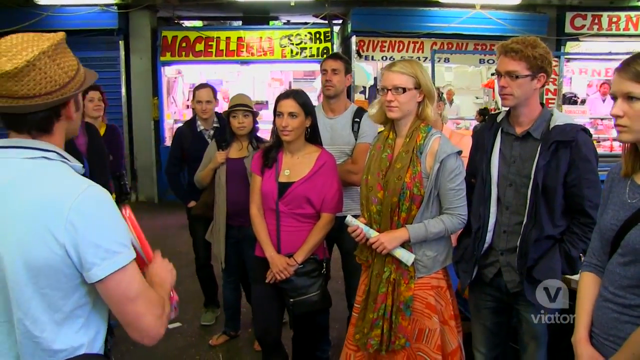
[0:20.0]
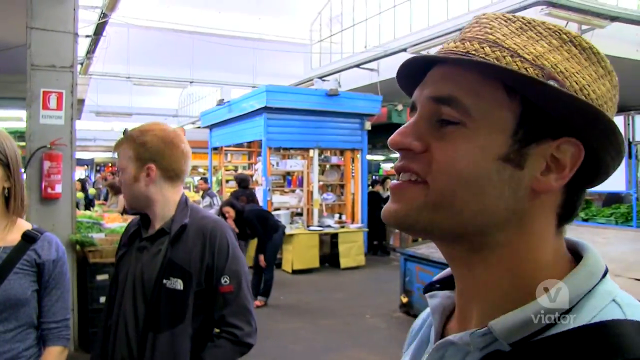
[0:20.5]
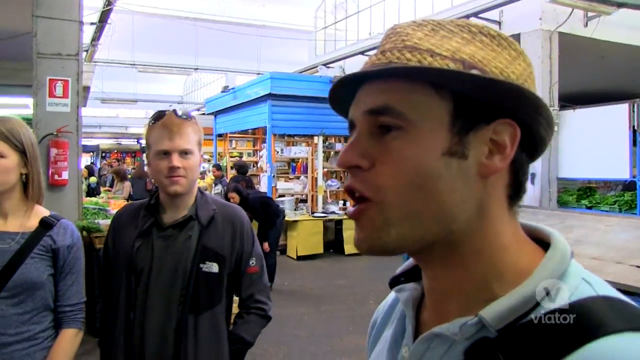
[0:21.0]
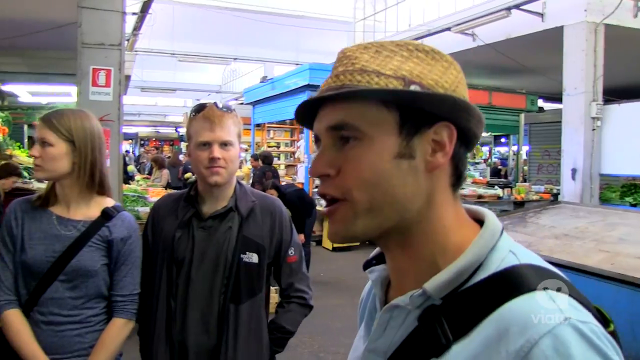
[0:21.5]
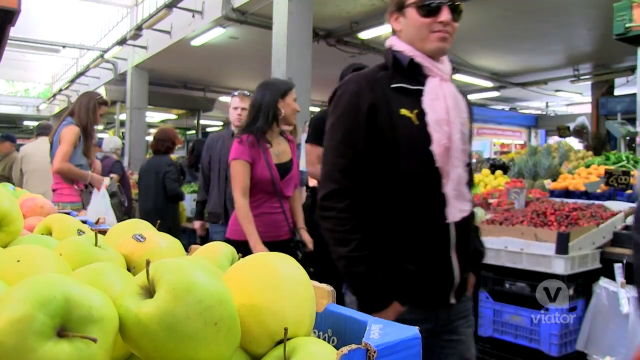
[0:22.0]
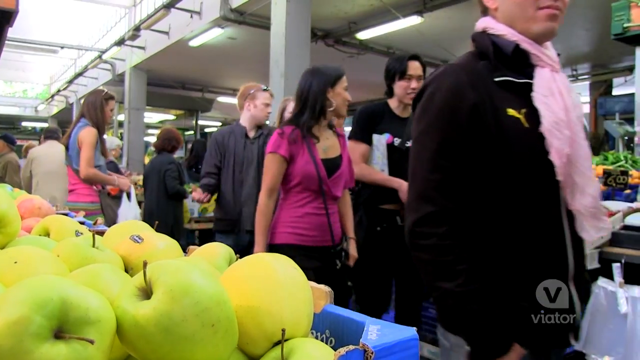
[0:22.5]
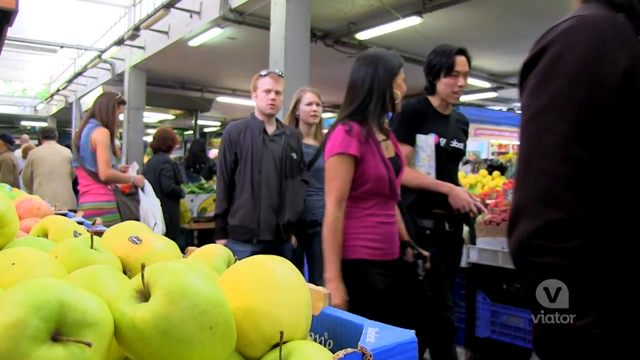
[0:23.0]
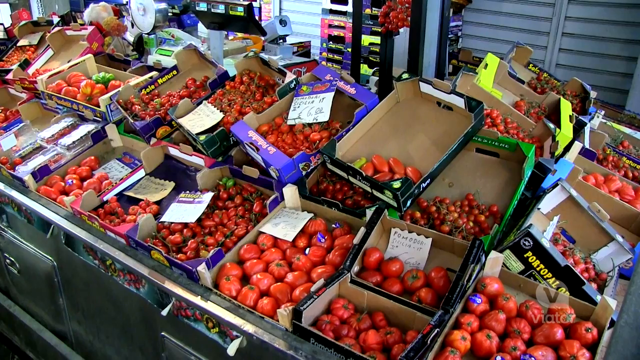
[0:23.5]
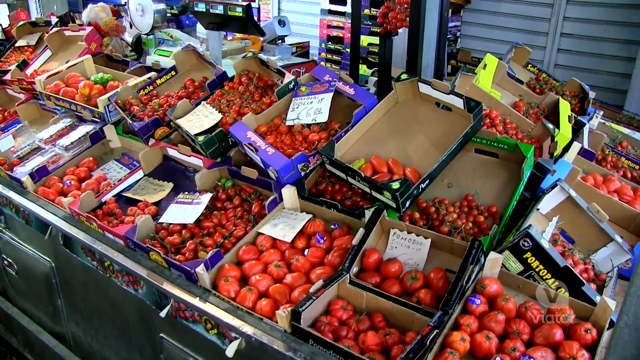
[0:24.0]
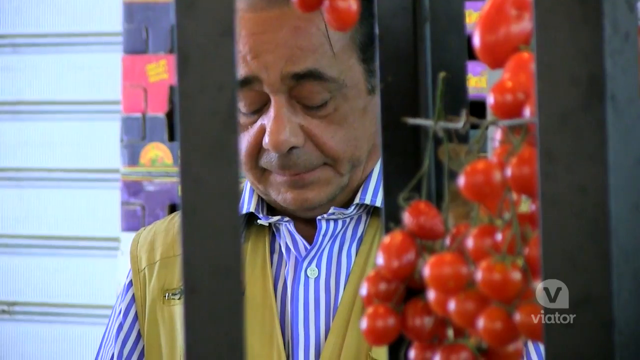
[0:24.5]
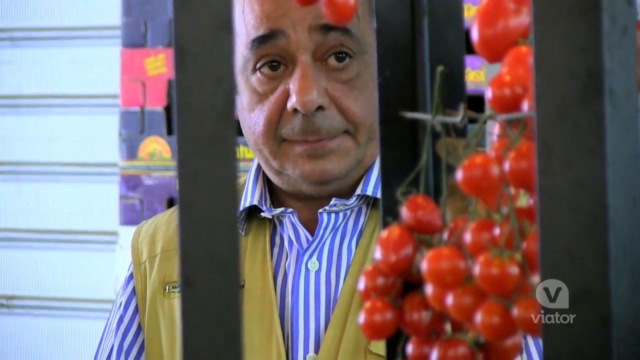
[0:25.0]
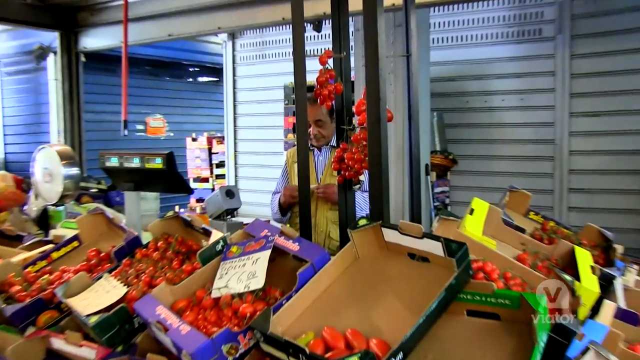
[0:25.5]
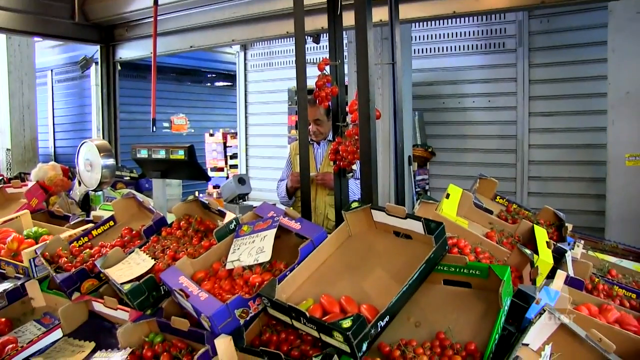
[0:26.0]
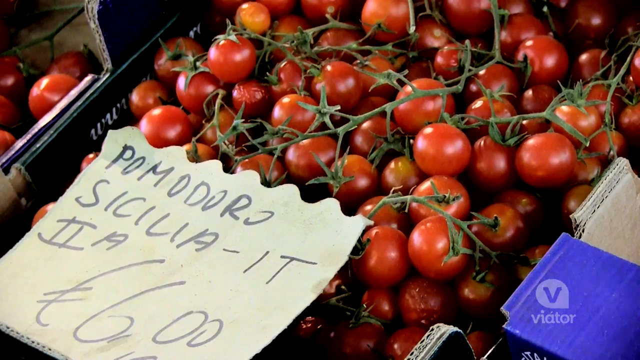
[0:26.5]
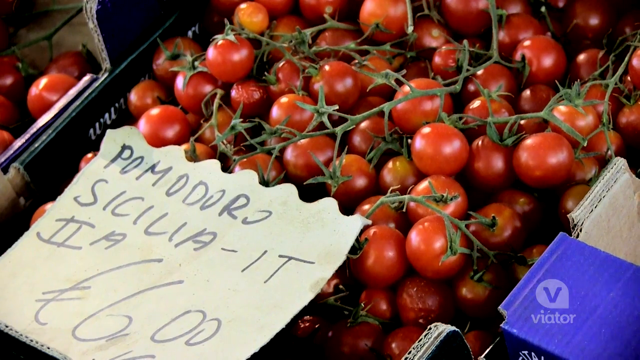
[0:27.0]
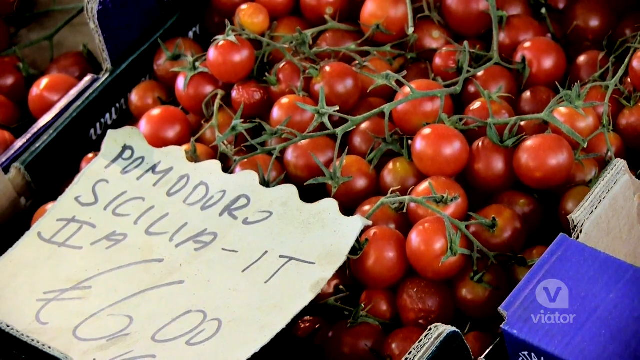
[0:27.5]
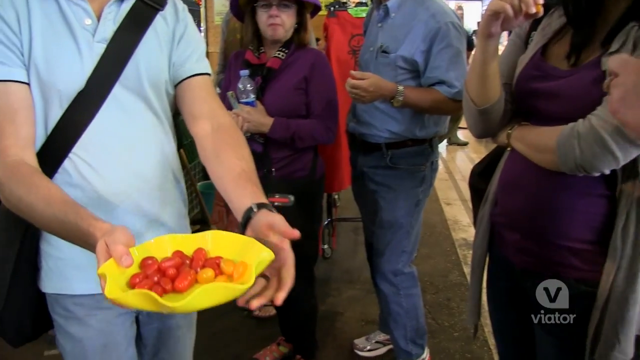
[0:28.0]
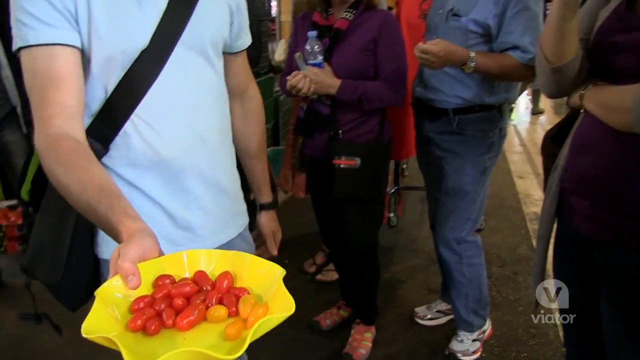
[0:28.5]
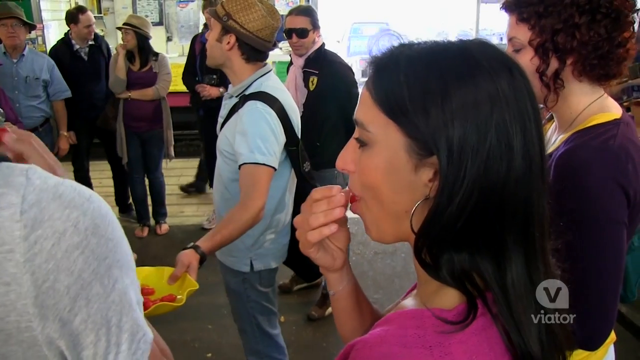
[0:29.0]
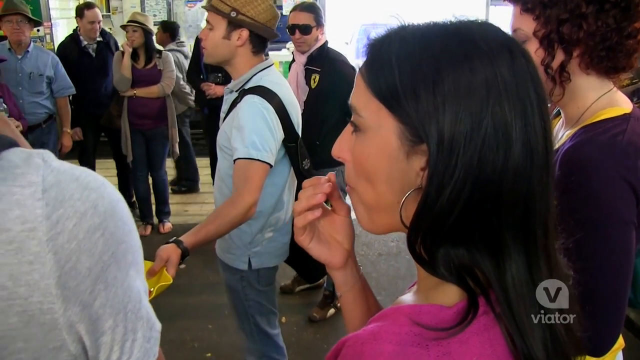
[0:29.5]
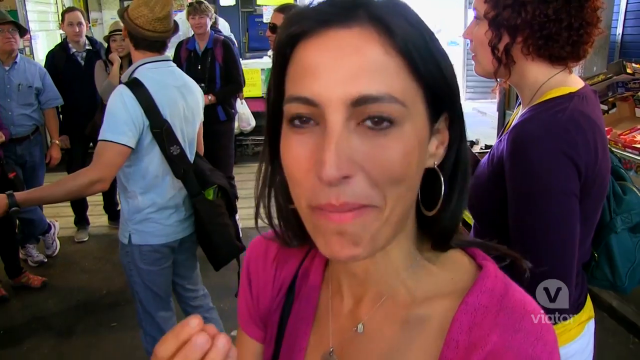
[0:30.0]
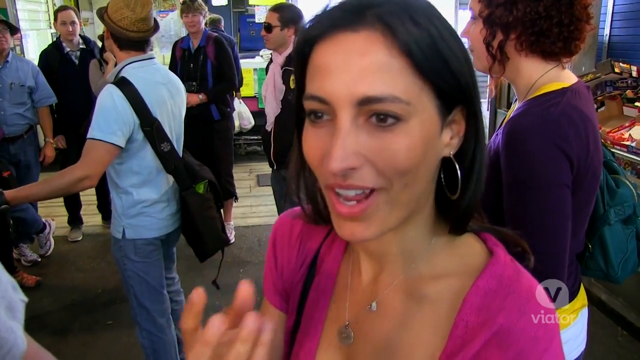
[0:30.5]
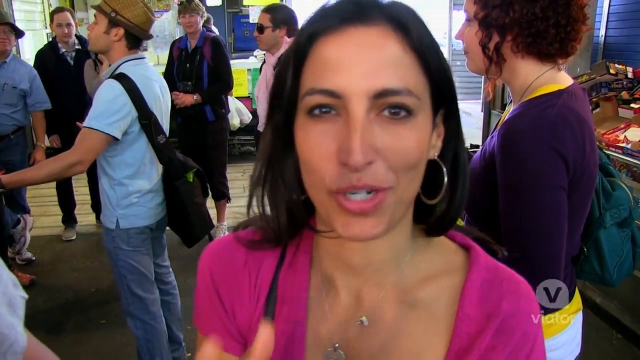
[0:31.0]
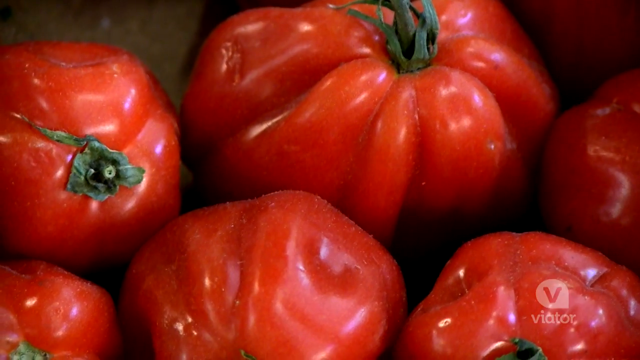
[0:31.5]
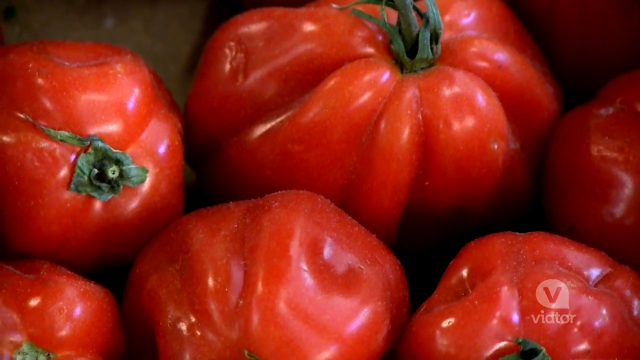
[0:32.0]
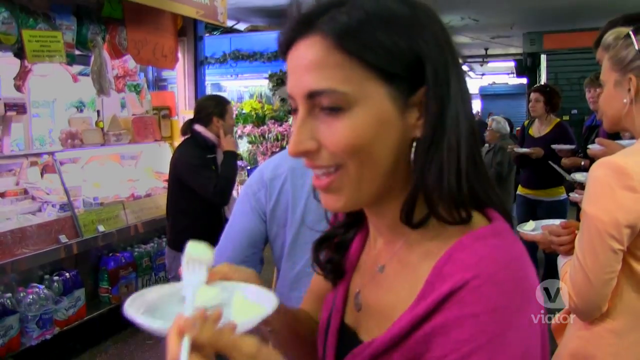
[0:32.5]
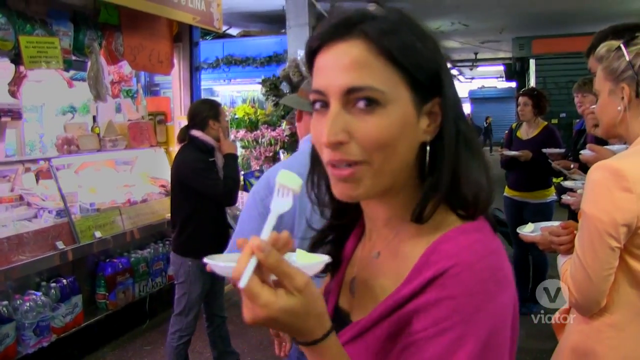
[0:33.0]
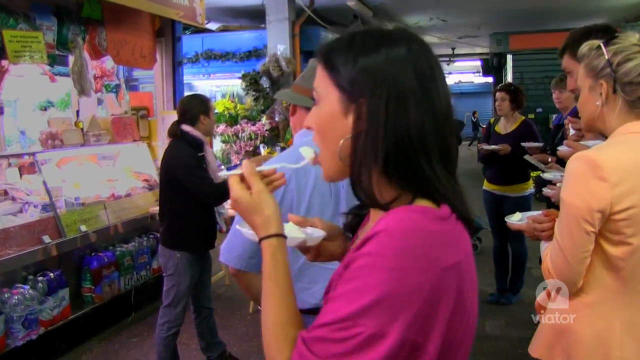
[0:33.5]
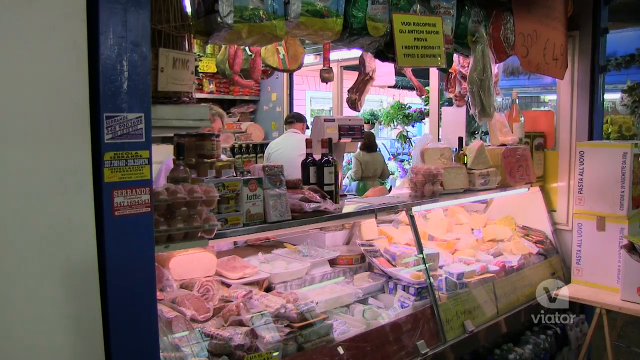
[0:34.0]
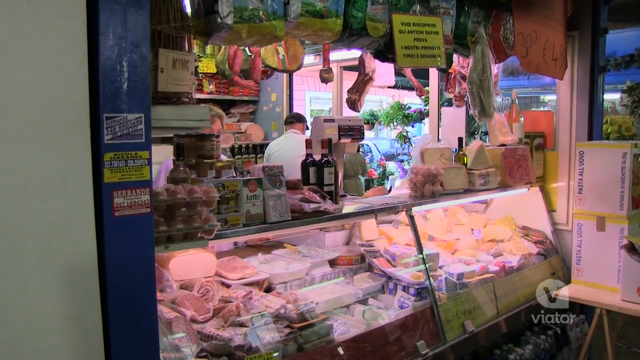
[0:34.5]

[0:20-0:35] People appear to be on some sort of food walking tour. There are boxes and boxes of fresh tomatoes, and a sign identifies them as pomodoro tomatoes. An older gentleman sells the pomodoro tomatoes and other types of tomatoes, some of which look like they could be heirloom or Roma tomatoes; the tomatoes apparently can also be bought per pound. Another stall appears to have green apples or pears. People taste the tomatoes, eat, talk to each other and walk around, passing around plates of samples. Dry cured meats hang from the ceiling. One stall looks like it is selling russet potatoes, and another looks like it is selling deli meats.